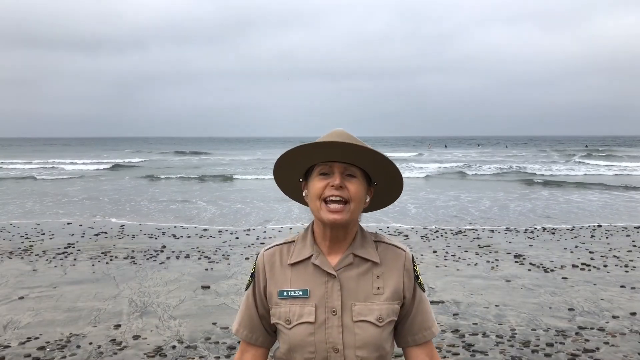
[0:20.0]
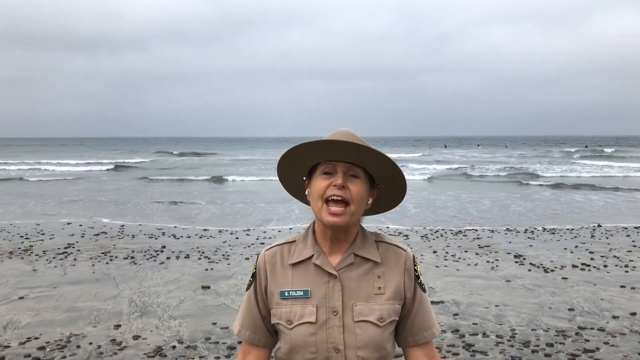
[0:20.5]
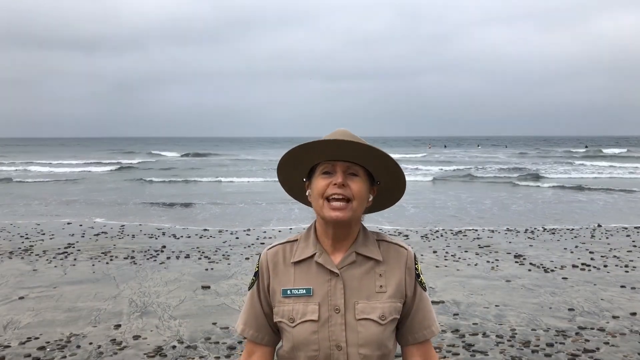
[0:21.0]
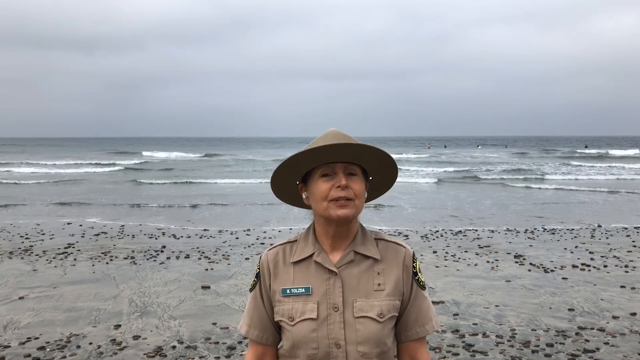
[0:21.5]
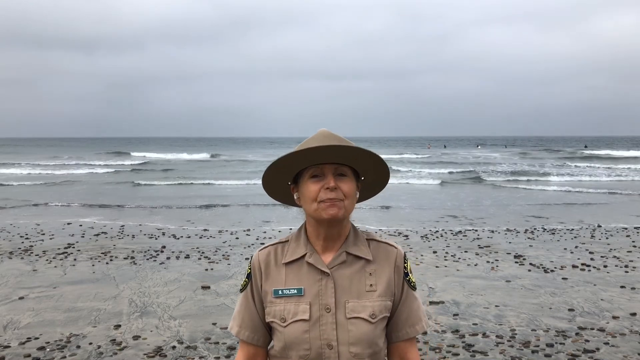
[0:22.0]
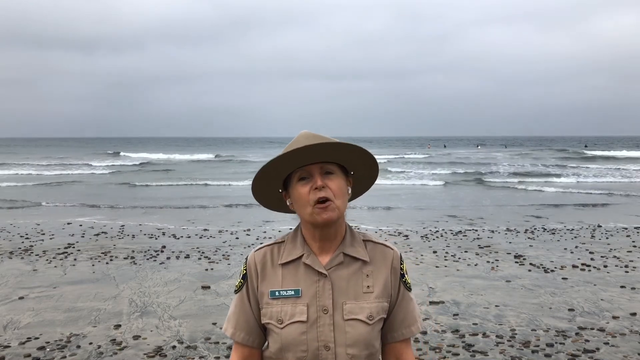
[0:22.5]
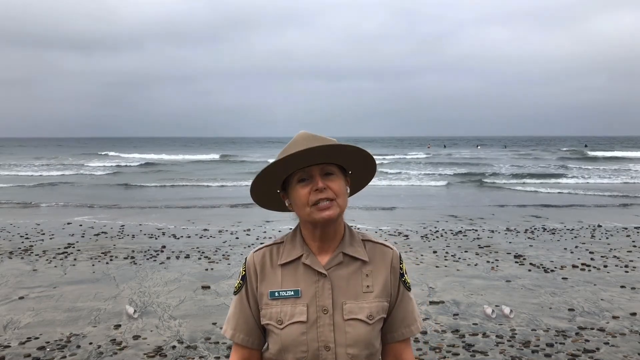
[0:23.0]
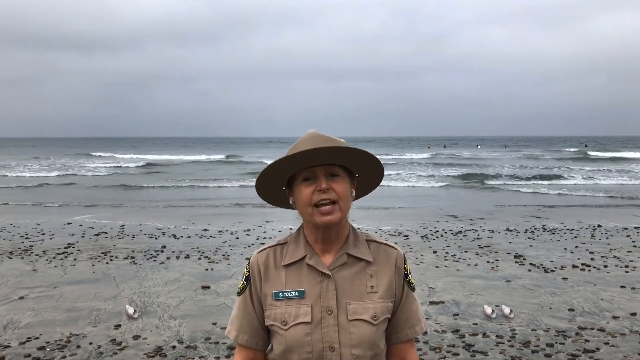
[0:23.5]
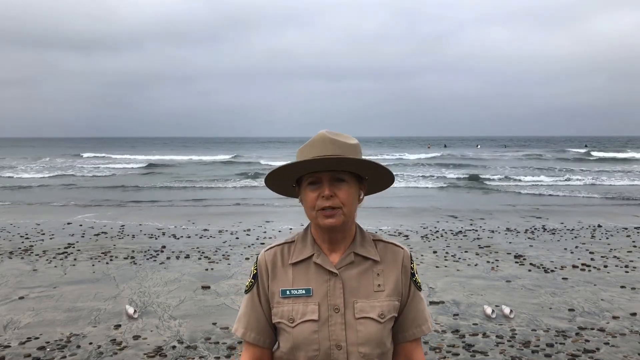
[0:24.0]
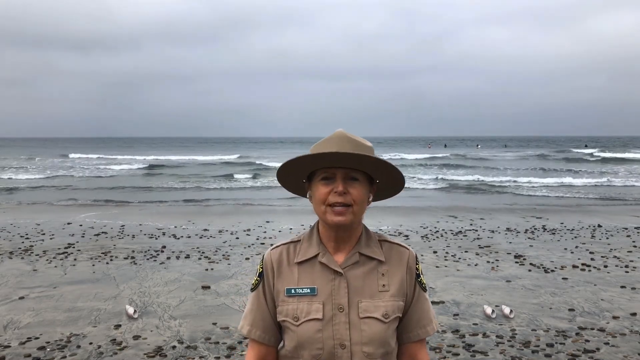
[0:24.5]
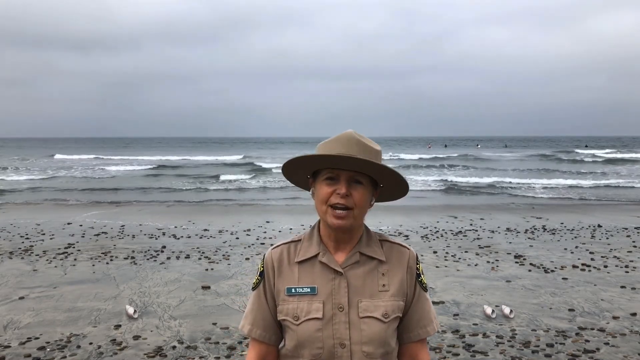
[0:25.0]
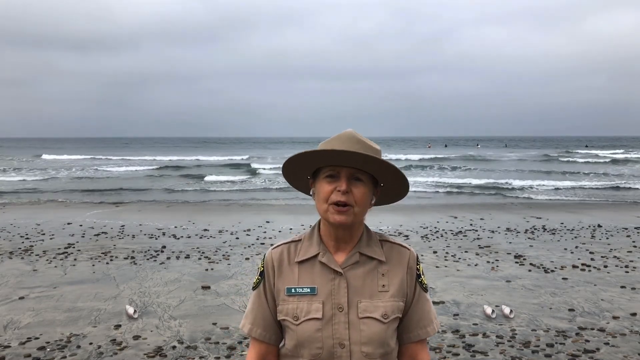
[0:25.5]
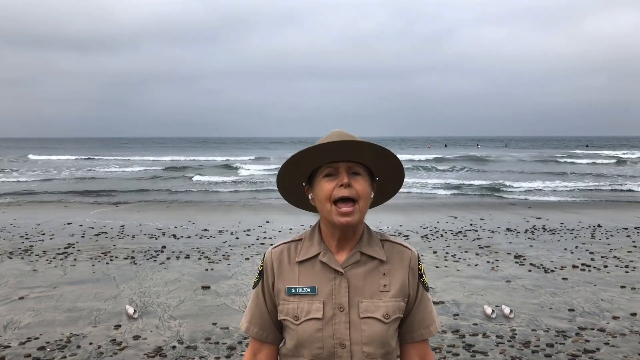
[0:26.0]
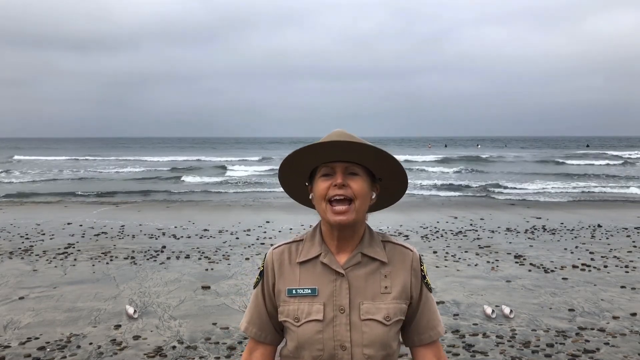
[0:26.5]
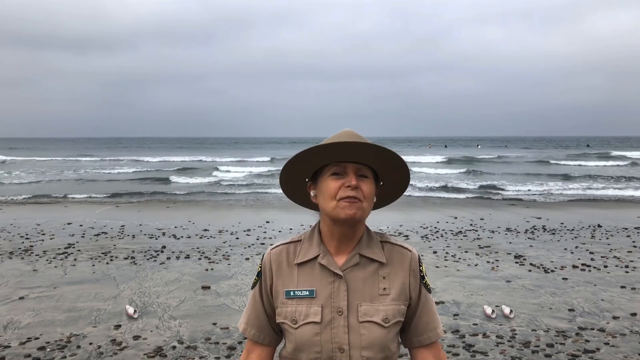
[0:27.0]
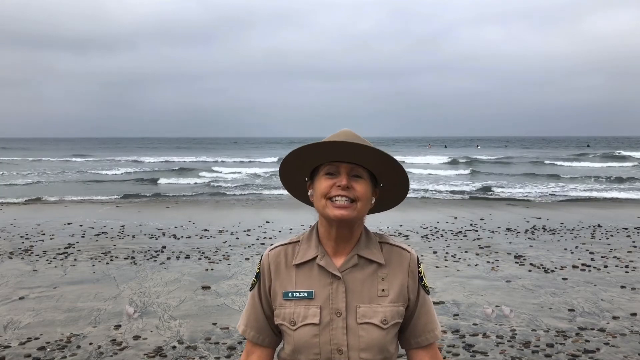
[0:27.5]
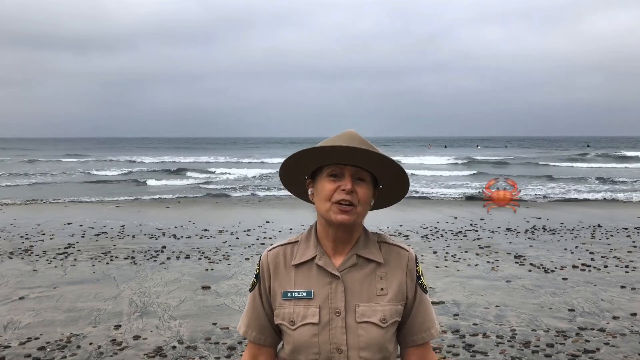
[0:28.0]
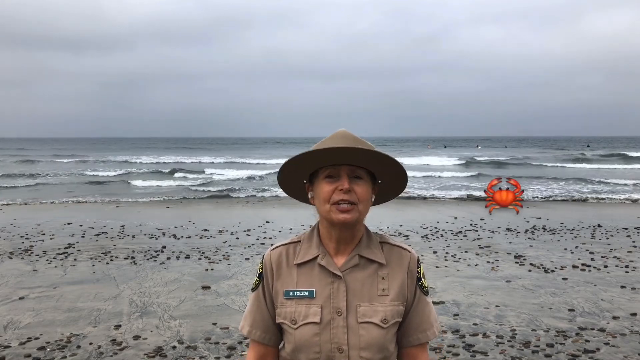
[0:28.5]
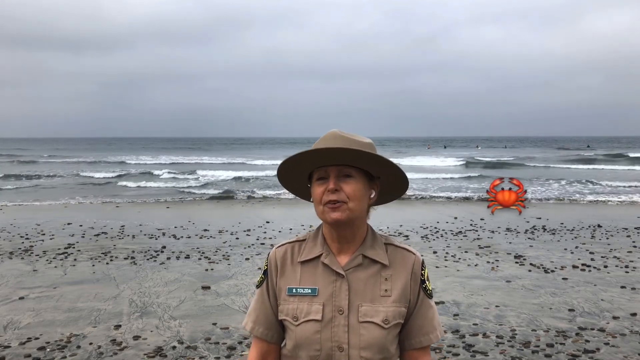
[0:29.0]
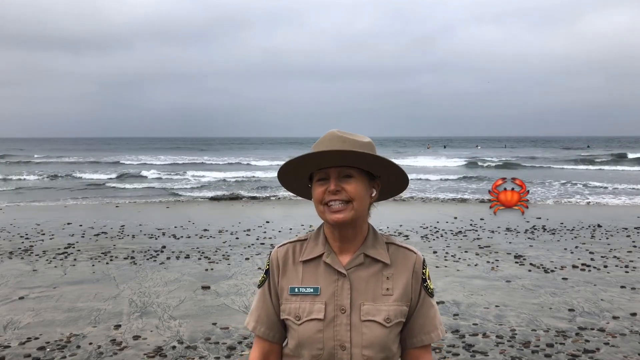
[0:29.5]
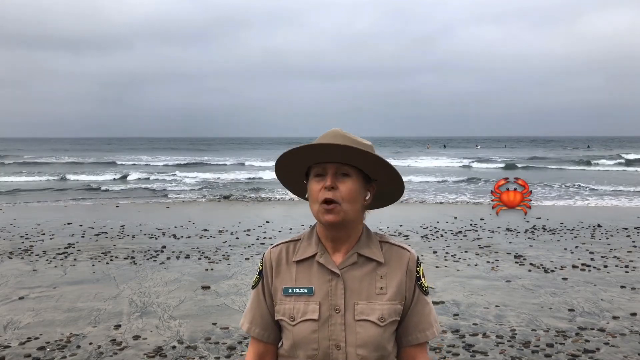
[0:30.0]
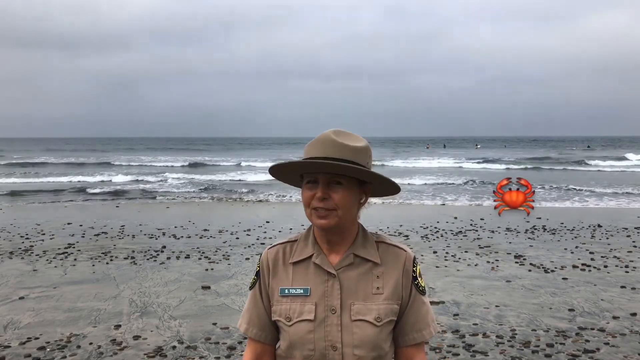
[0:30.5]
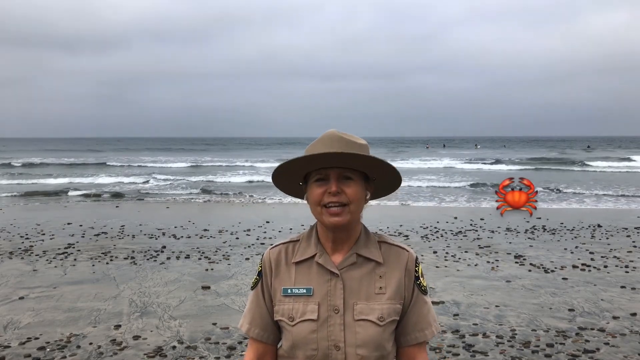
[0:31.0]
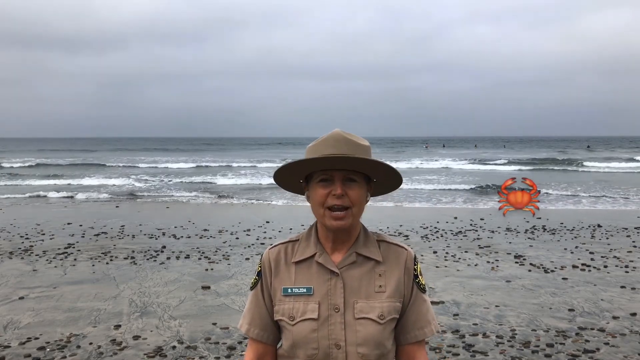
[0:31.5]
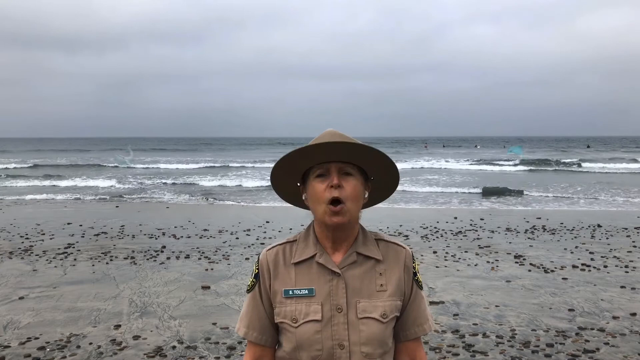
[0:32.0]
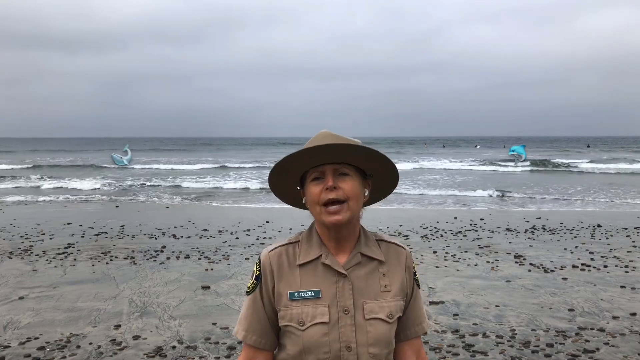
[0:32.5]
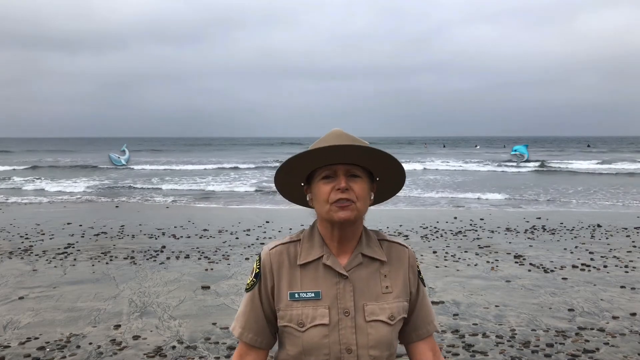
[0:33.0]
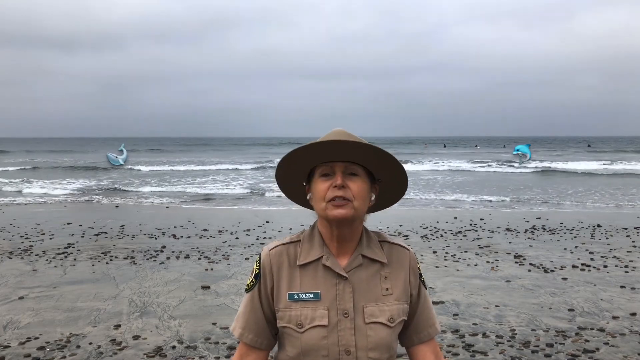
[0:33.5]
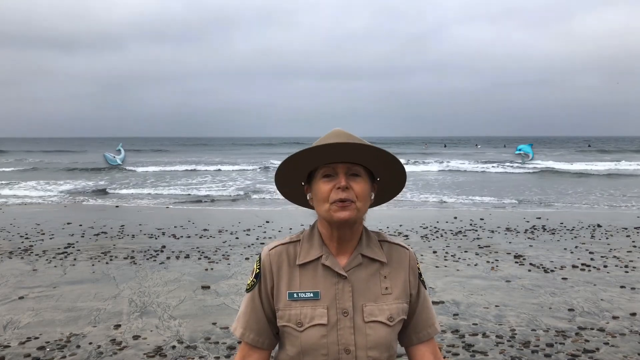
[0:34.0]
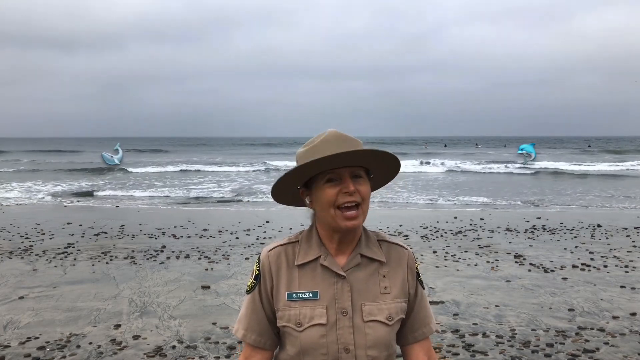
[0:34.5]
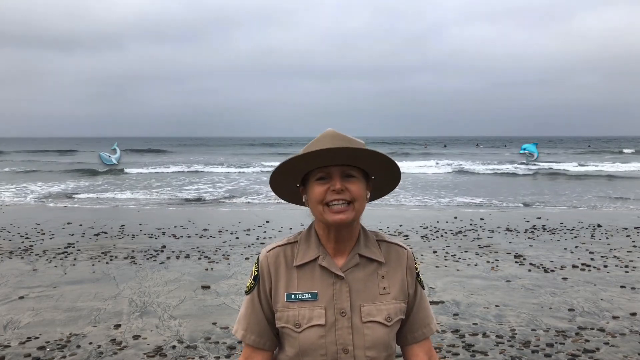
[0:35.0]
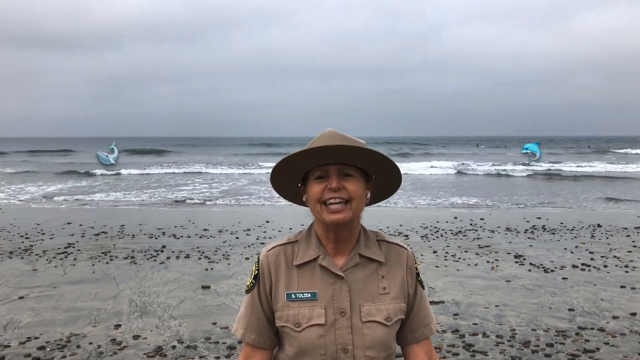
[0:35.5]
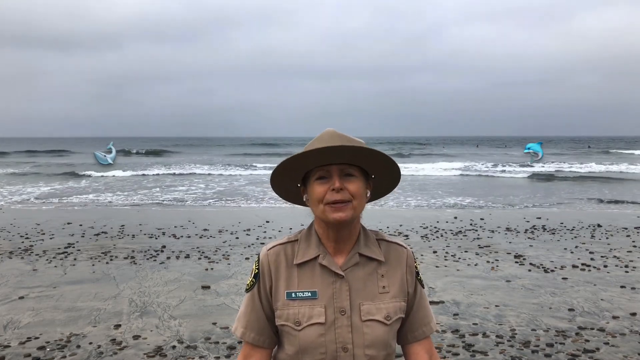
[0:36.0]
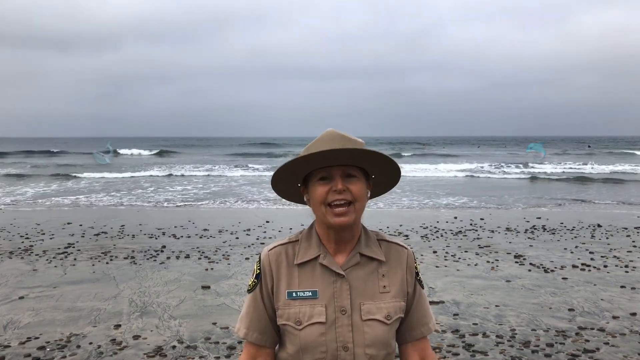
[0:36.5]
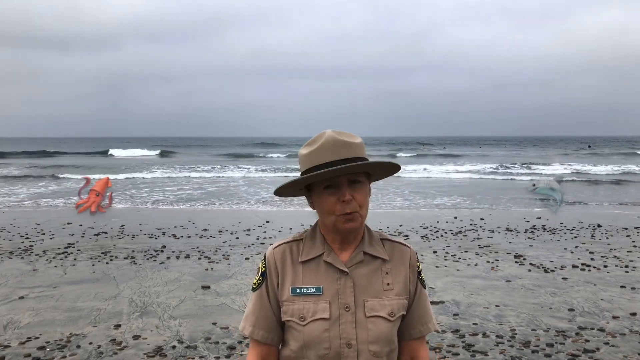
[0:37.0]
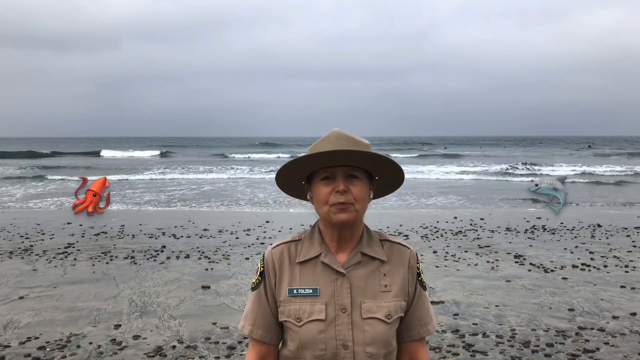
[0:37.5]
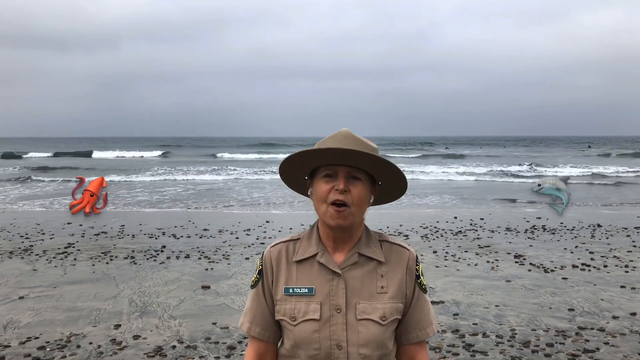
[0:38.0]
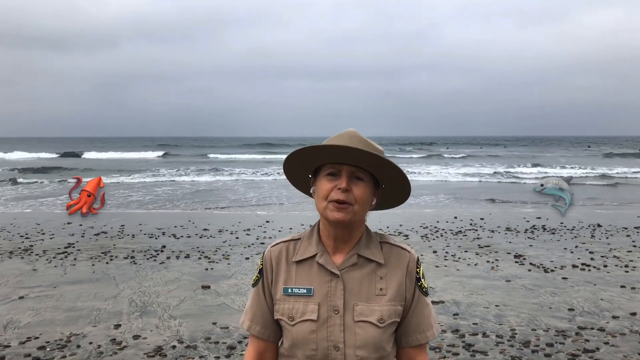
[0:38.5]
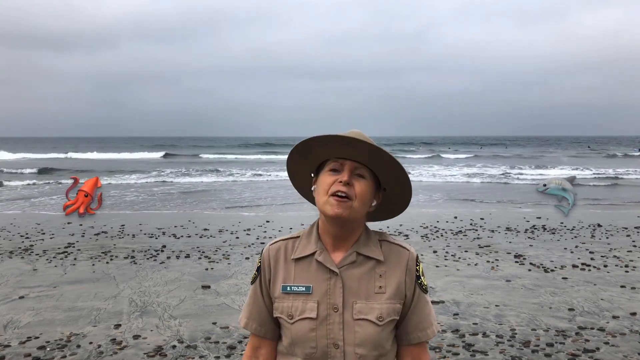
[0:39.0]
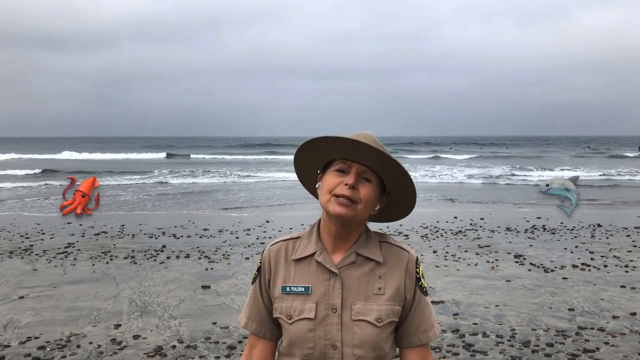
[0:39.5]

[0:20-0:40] Sandy stands in front of the big ocean on a beach that seems to have some shells washed ashore. She talks to the camera and appears to be shouting, seemingly because the ocean is loud. Behind her the ocean roars, waves come in and out, and seagulls fly by. A photo of a club appears on the side of the screen, then disappears and is replaced by a photo of a blue dolphin, with a photo of a whale on the right side; these seem to be the animals she is talking about. Next, a photo of a squid appears on her right and a photo of a shark on her left, apparently about species in the ocean.